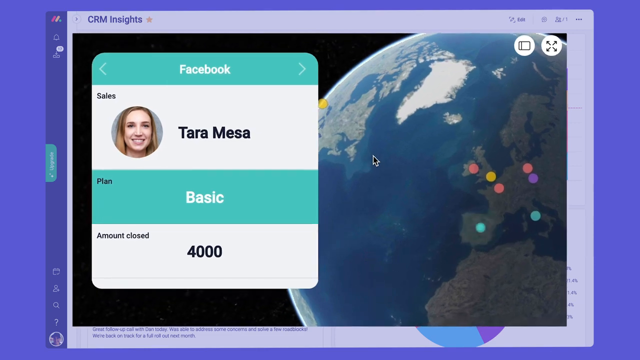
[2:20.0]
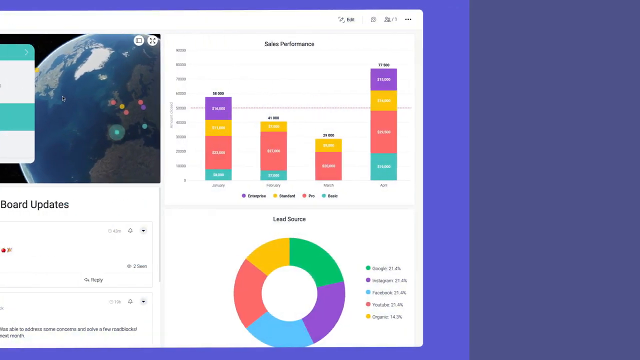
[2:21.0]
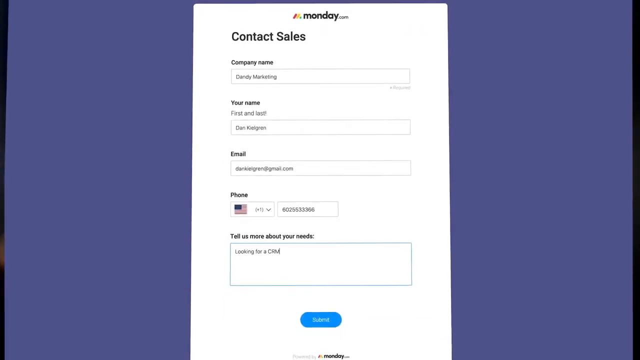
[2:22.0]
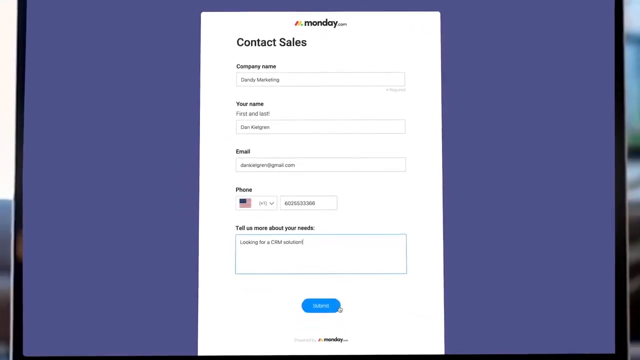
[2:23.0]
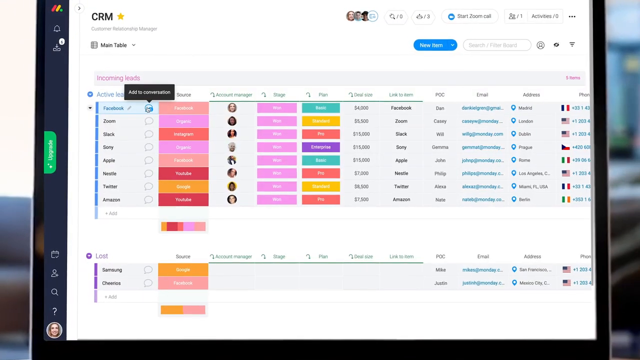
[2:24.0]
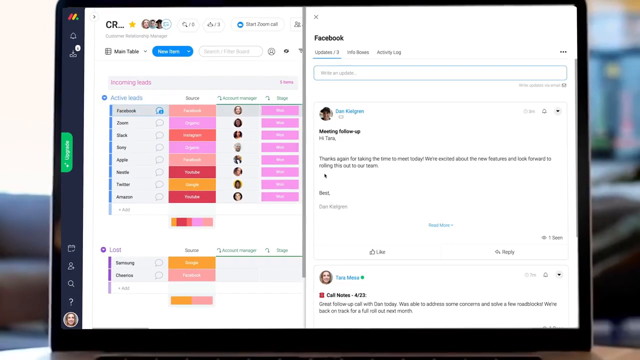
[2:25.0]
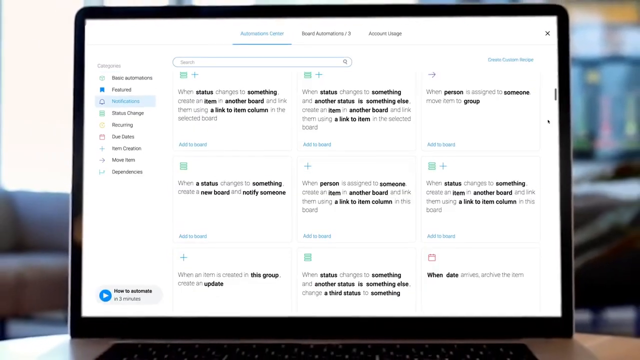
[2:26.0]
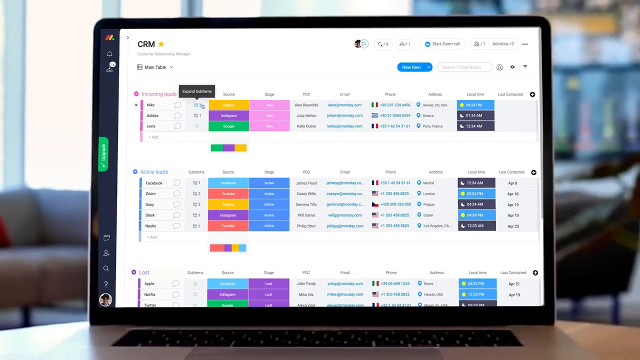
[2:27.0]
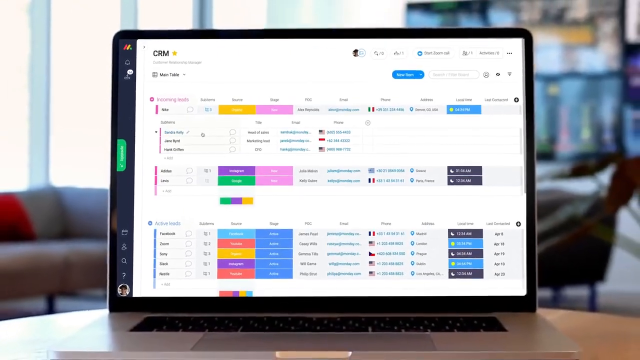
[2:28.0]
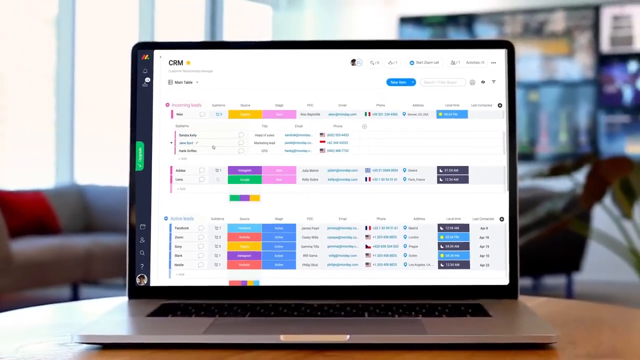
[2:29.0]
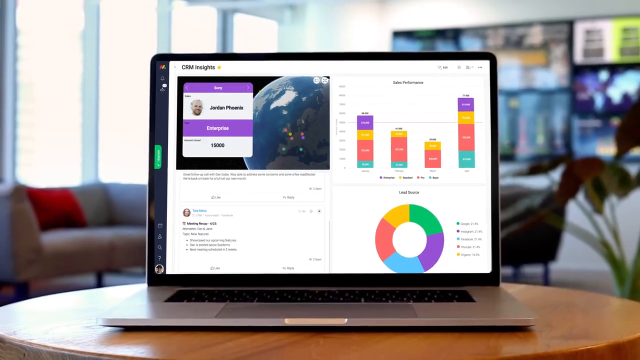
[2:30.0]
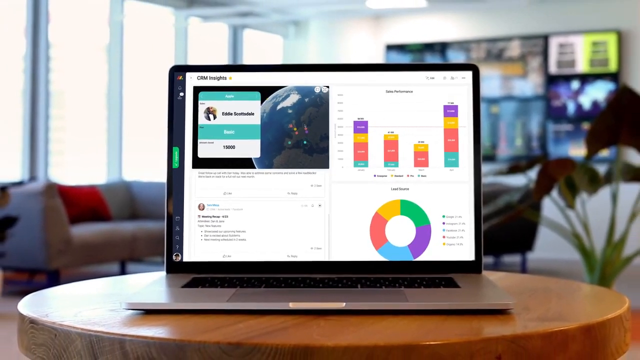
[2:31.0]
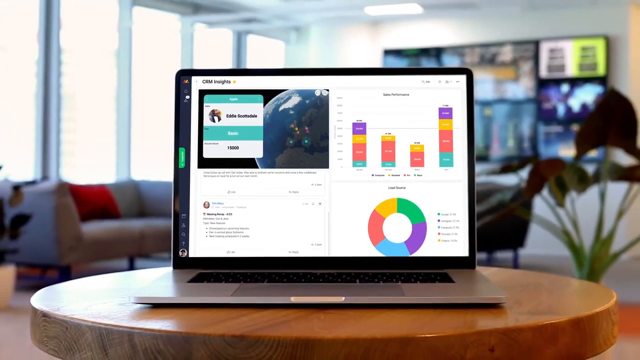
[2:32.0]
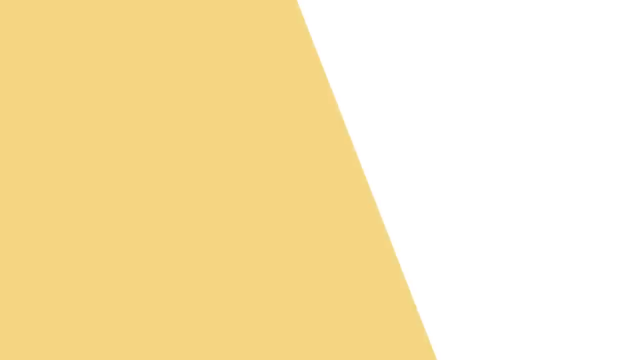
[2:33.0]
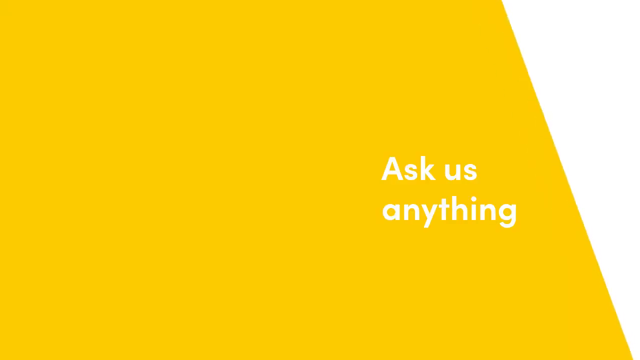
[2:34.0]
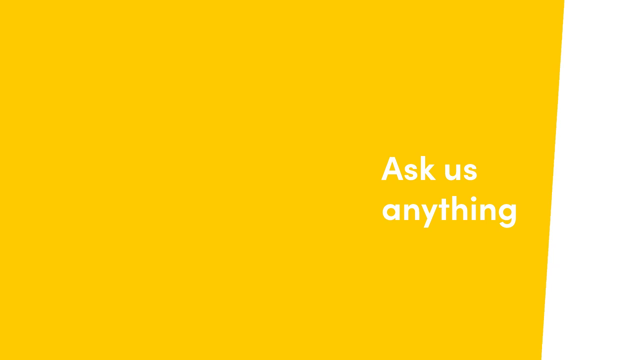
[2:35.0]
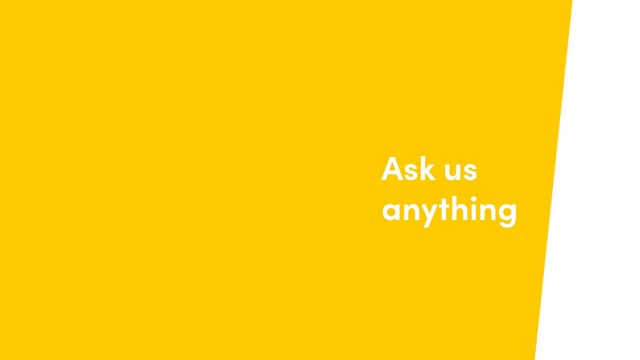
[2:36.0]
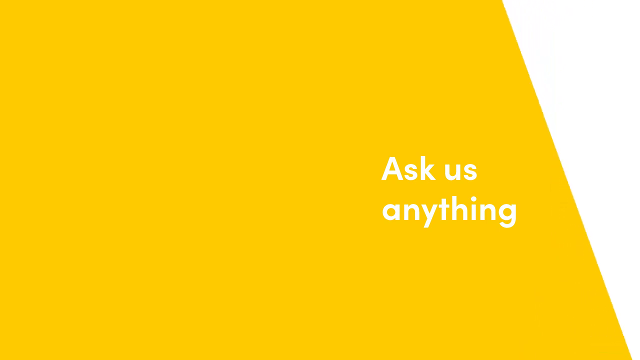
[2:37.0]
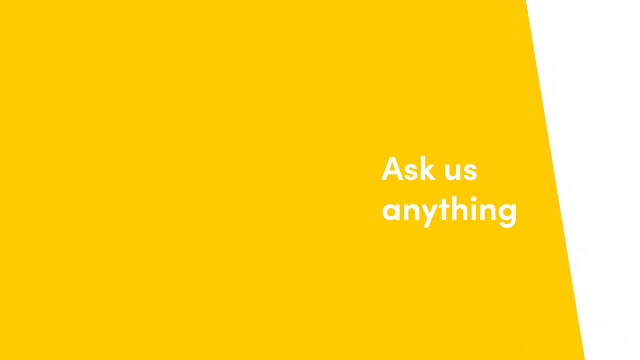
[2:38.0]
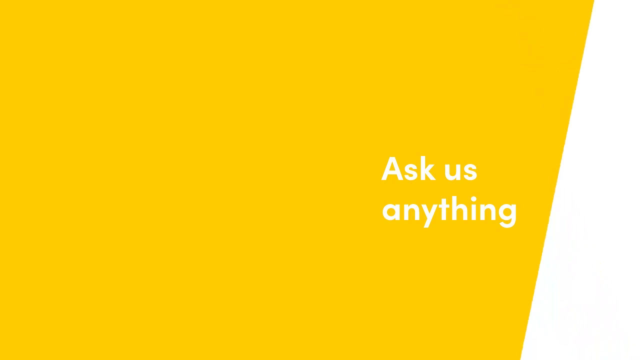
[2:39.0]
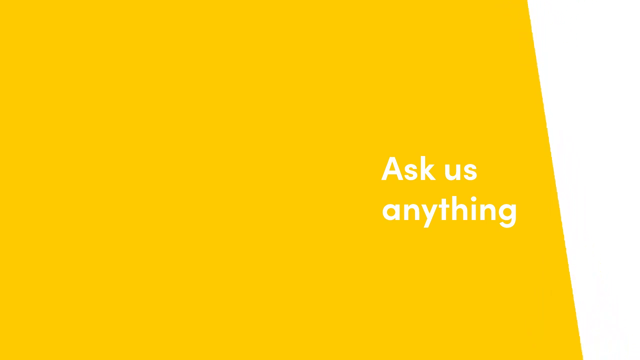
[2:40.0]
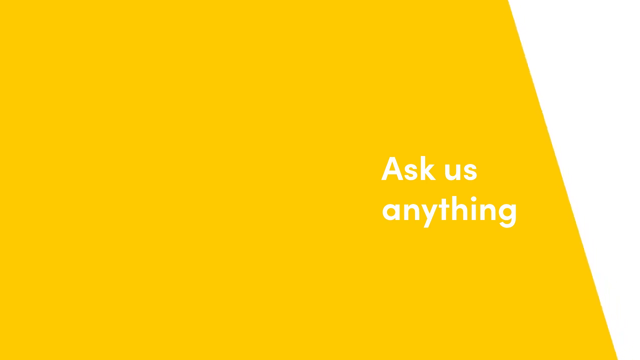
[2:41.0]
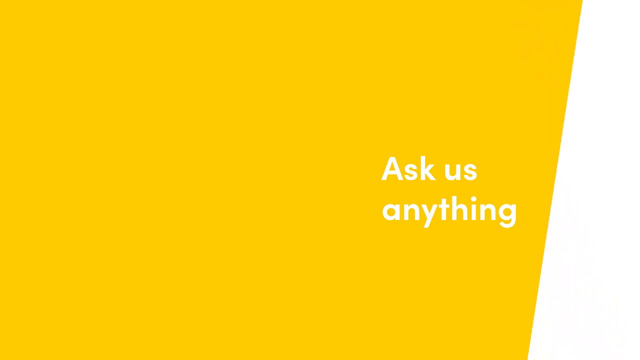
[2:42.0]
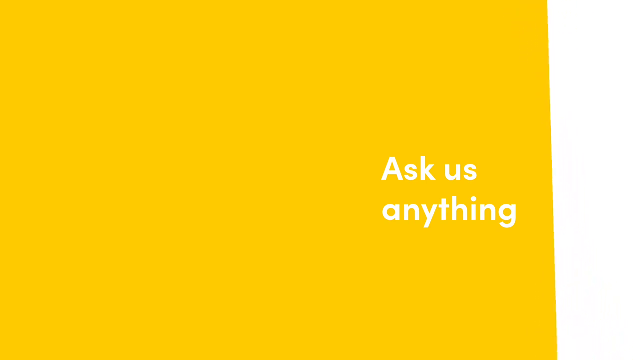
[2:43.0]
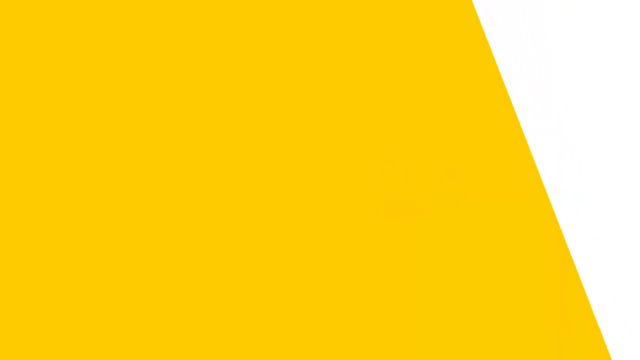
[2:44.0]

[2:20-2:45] A pop-up is shown, then the view returns to the contact sales form. The top says "Monday," followed by "contact sales," with places for a name, email, and phone number and then a place to "tell us about your needs." The cursor is writing in that box. The submit button is clicked, and a pop-up appears that says "thank you" with a green thumbs up. The next shot is of the CRM page with more lists, and a feedback or Facebook page pops up. The next shot of the computer screen shows a program scrolling. The video then pans backwards in the same way it did at the beginning, revealing the background of the room: the laptop is sitting on a circular round table with a green plant to the right-hand side. The video ends with a yellow and white screen that says "ask us anything."